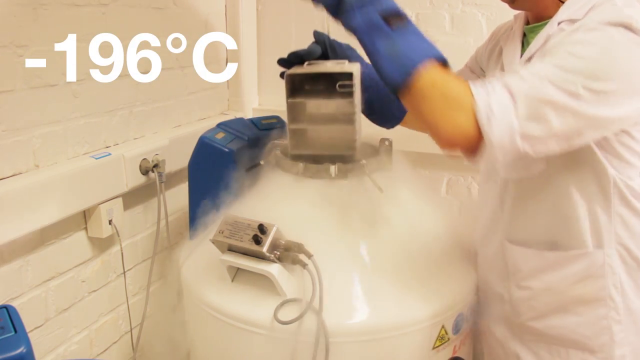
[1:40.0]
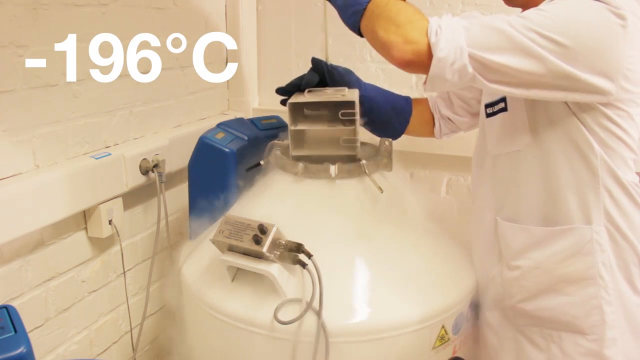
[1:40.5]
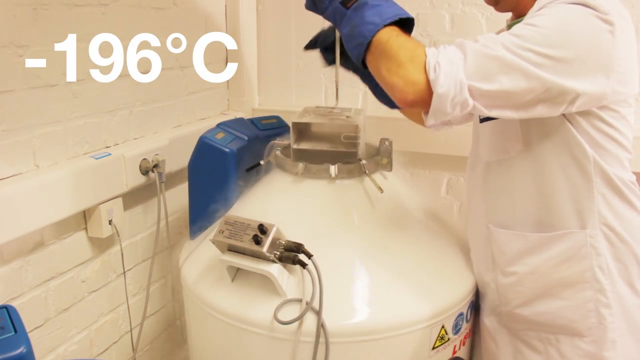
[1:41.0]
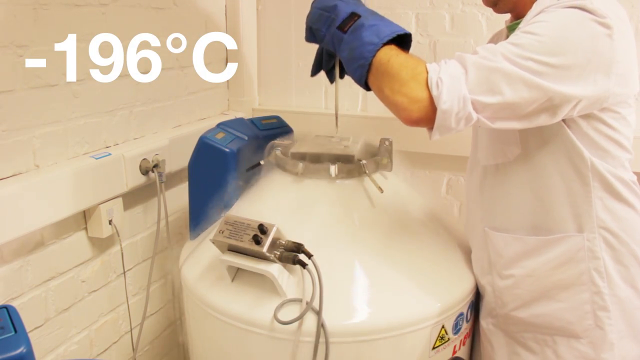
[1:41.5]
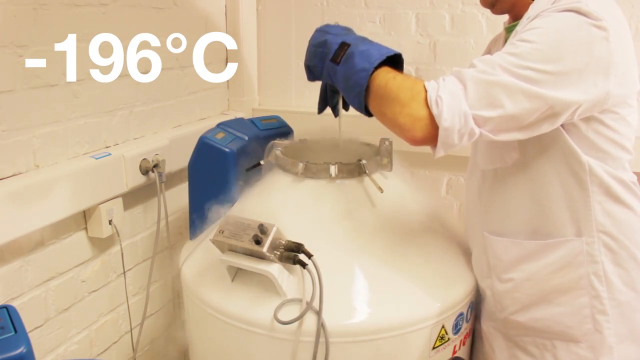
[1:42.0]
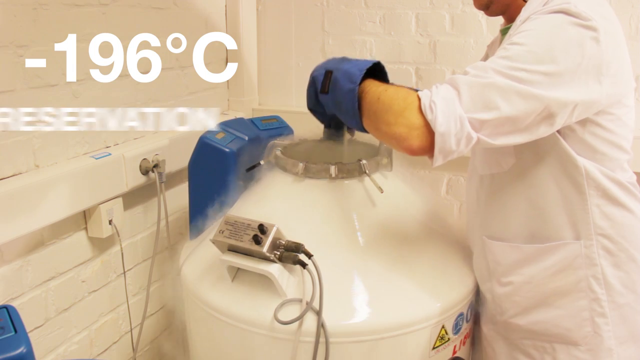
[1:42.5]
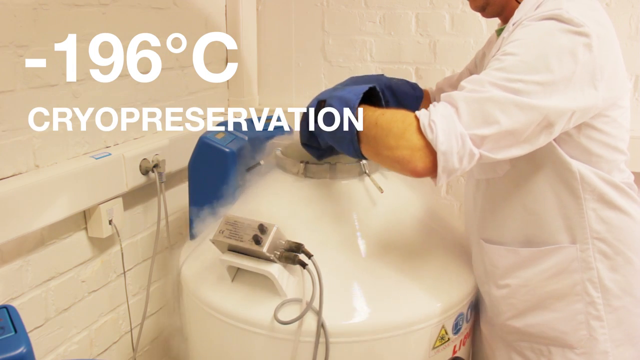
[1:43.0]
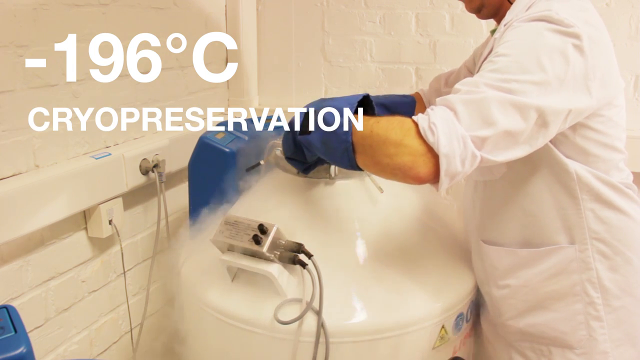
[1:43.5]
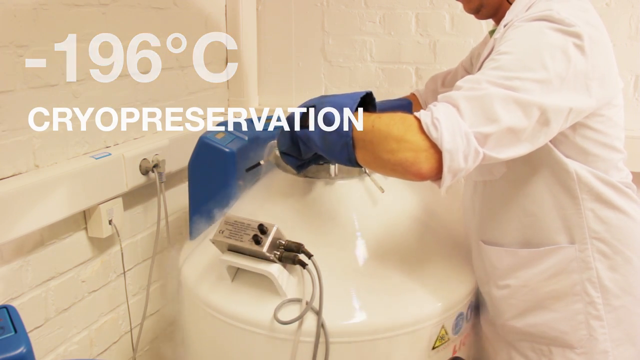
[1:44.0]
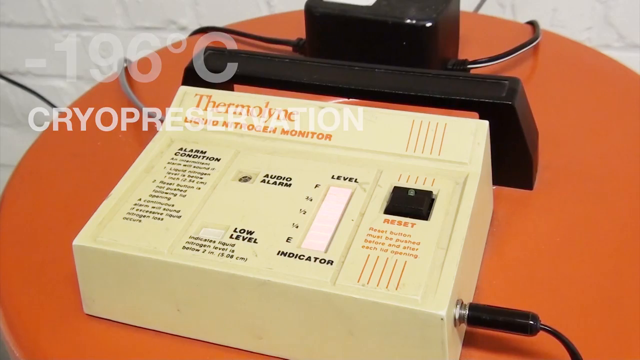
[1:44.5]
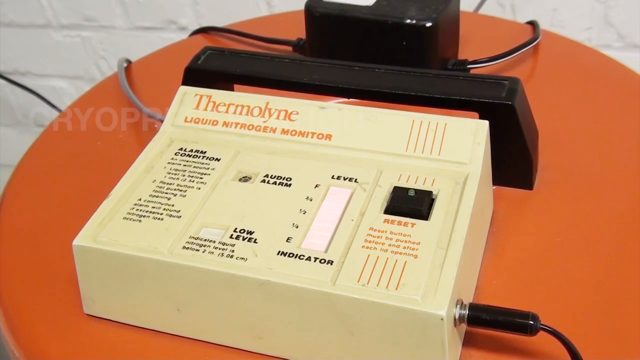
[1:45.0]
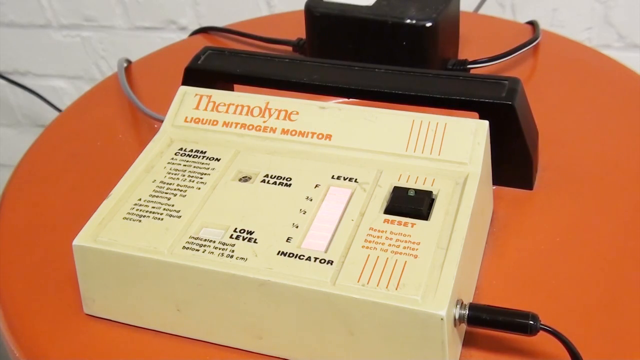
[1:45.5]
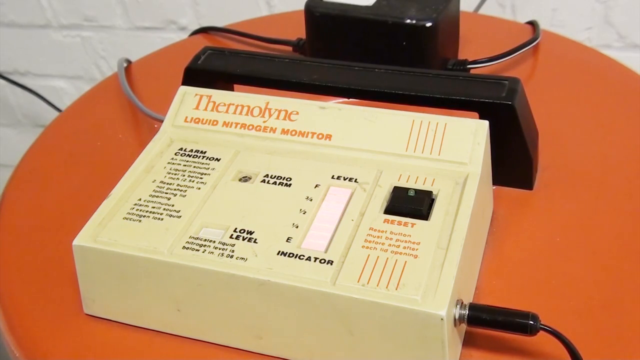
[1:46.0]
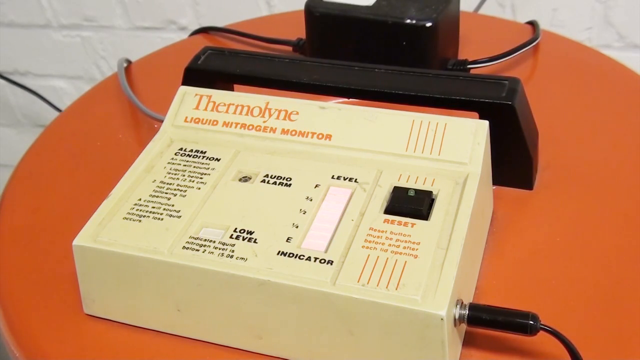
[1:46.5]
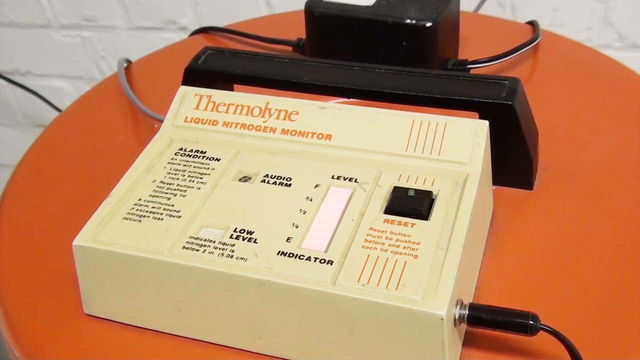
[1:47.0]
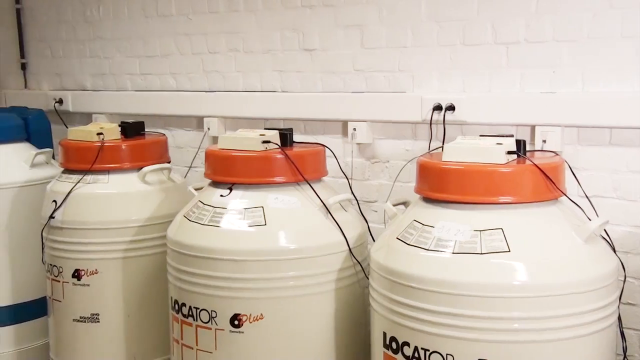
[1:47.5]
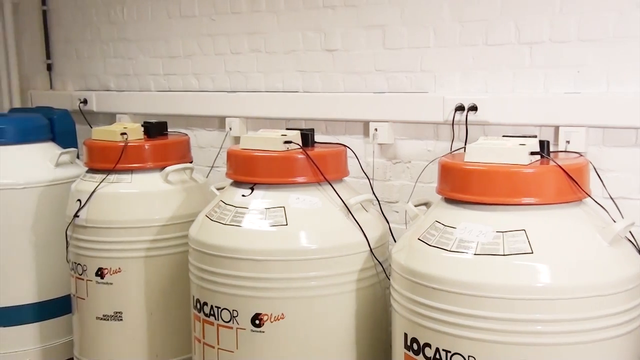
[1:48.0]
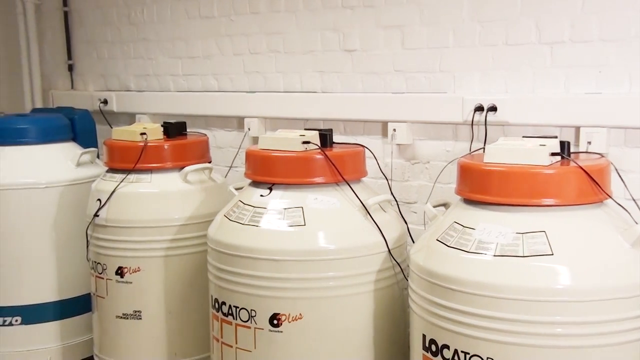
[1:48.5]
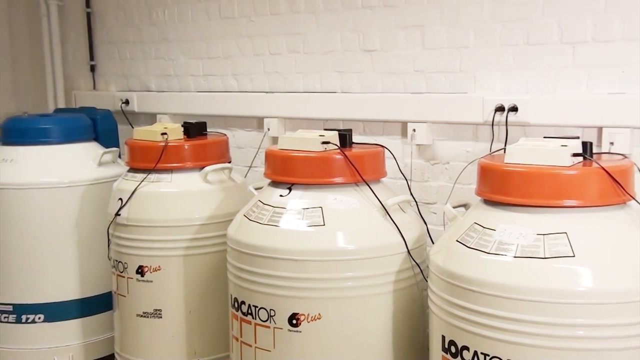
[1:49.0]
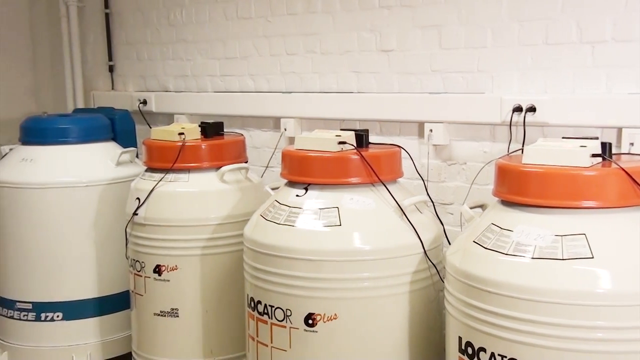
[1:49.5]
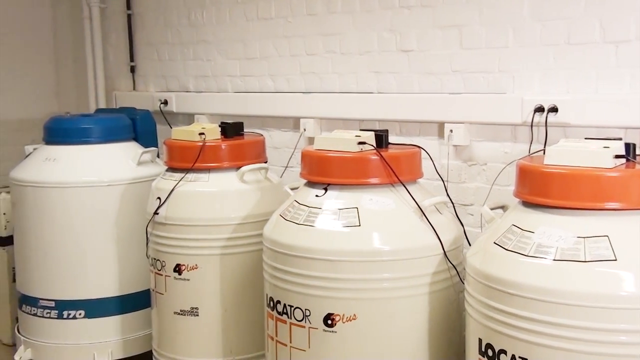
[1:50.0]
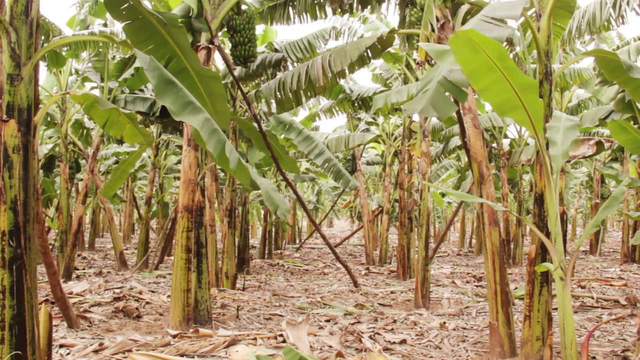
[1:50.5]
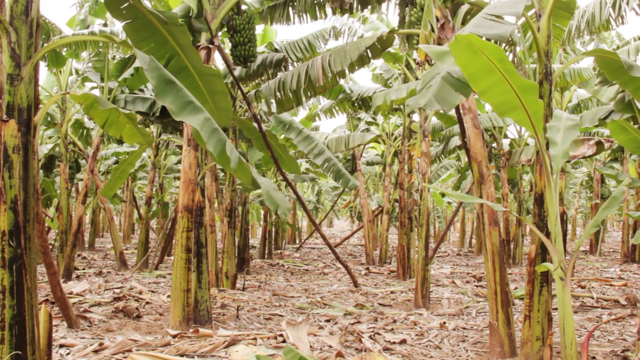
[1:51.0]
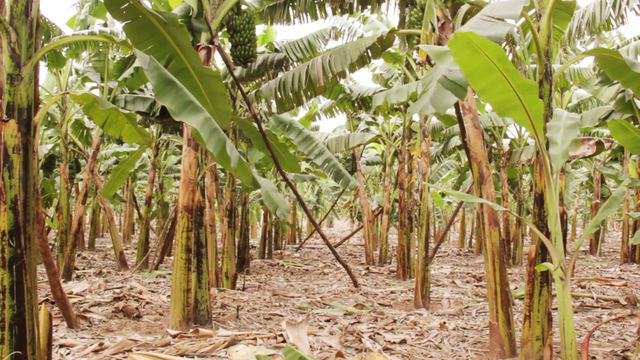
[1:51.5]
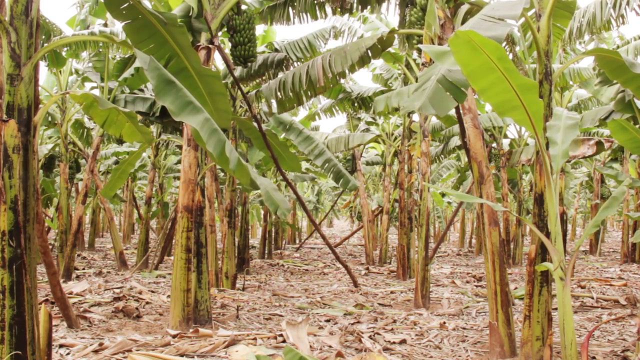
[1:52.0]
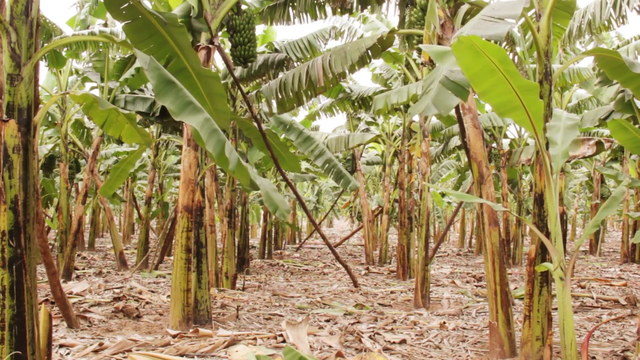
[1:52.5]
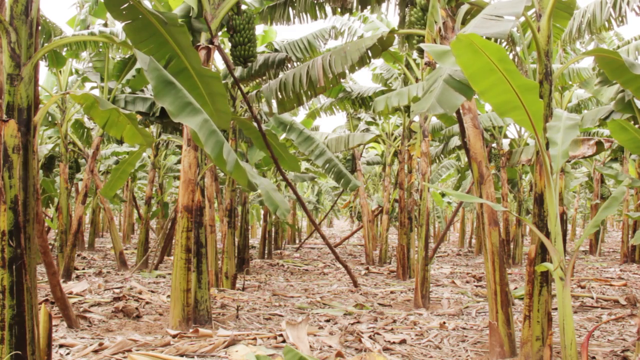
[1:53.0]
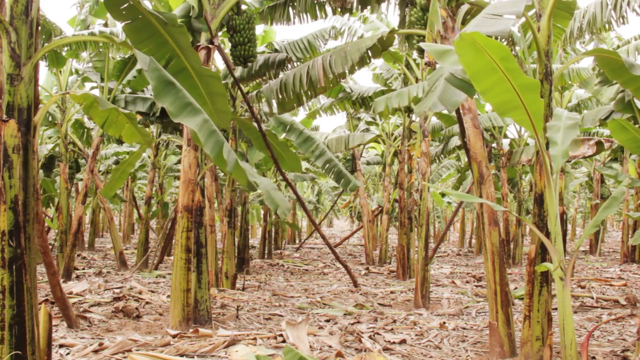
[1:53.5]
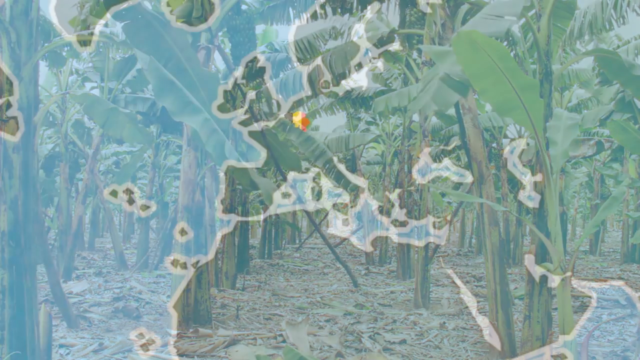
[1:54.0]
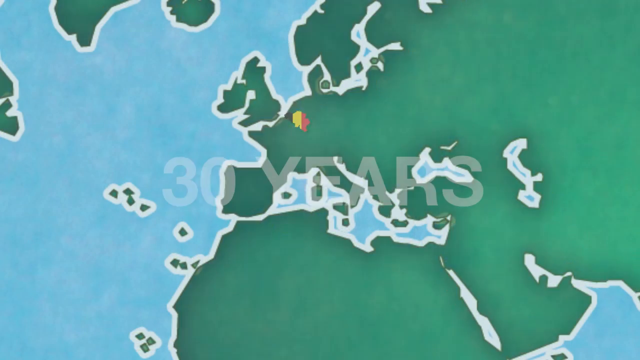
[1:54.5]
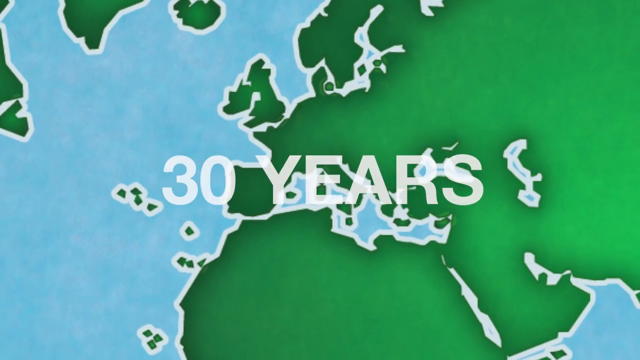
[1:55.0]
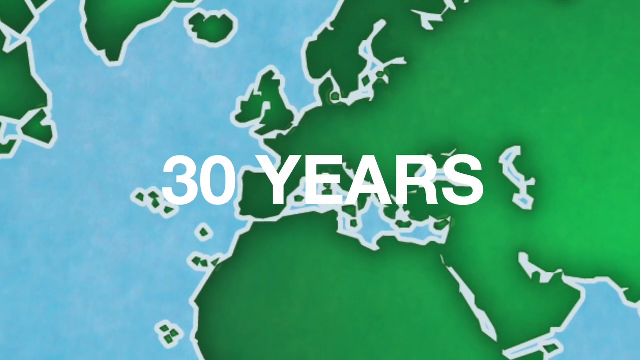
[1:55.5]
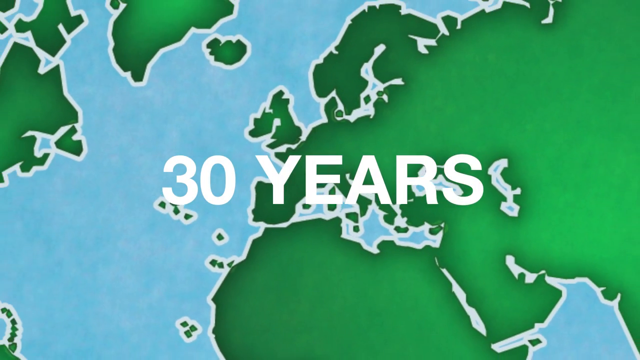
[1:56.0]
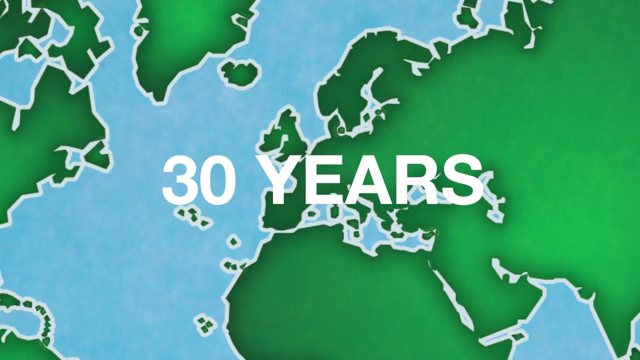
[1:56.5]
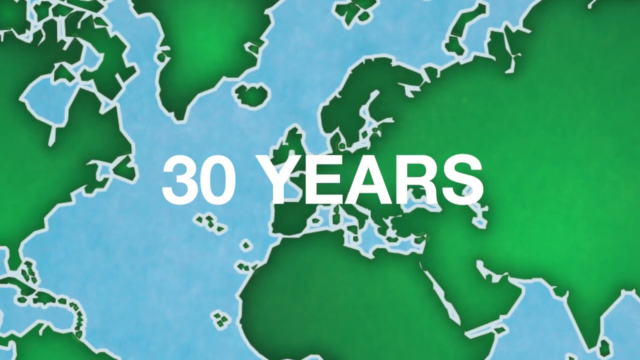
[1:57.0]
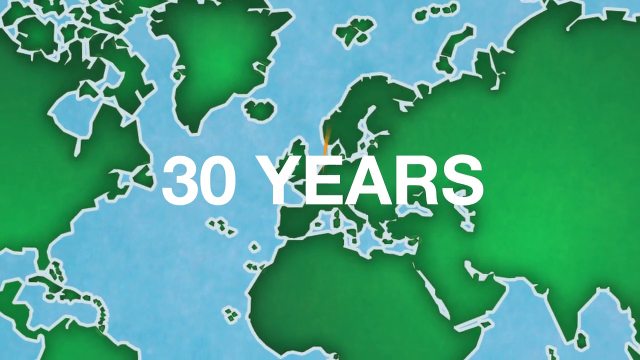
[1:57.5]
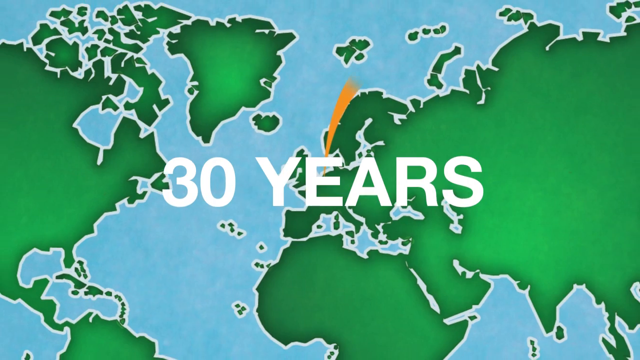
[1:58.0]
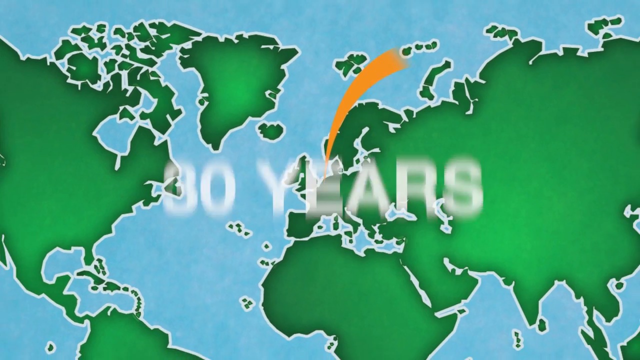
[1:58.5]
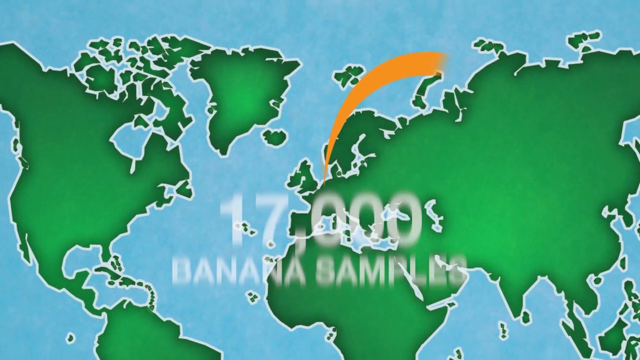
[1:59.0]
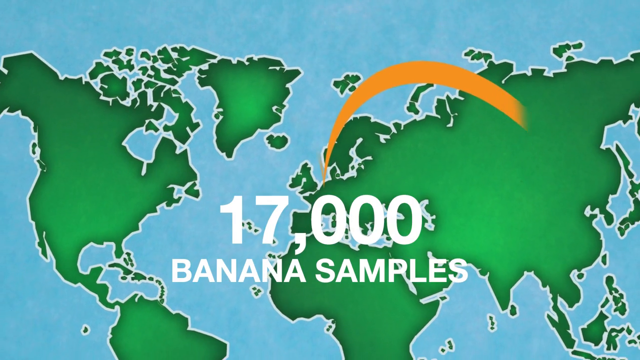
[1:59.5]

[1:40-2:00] A scientist in a white lab coat with sleeves rolled up and blue gloves stands at some type of machine shaped somewhat like a water heater, with smoke or steam coming out of it, and inserts something into its top. On screen is written "negative 196 degrees Celsius", with the word "cryopreservation" below it. Next, a Thermaline liquid nitrogen monitor appears to rest on what looks like a red table but turns out to be the top of the machine, as several of these machines are shown lined up together. The video then returns outdoors to what appear to be banana plants or trees, in a view near the ground showing leaves and stems. Then a globe outline appears with the text "30 years" as it zooms out, followed by "17,000 banana samples".